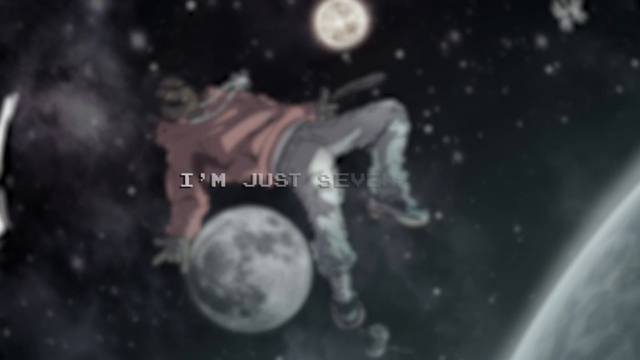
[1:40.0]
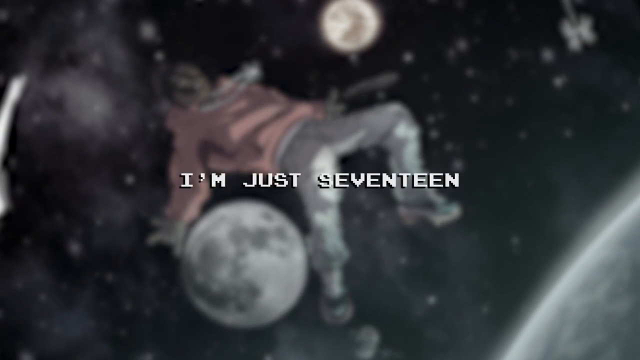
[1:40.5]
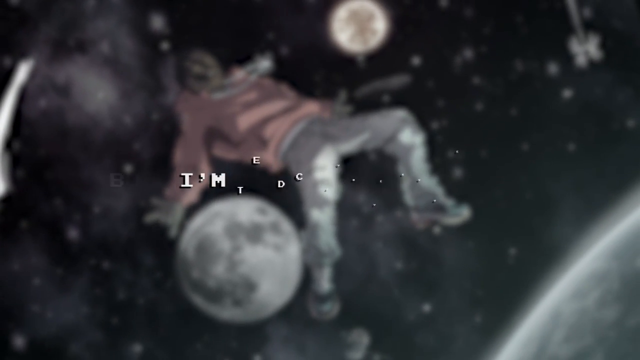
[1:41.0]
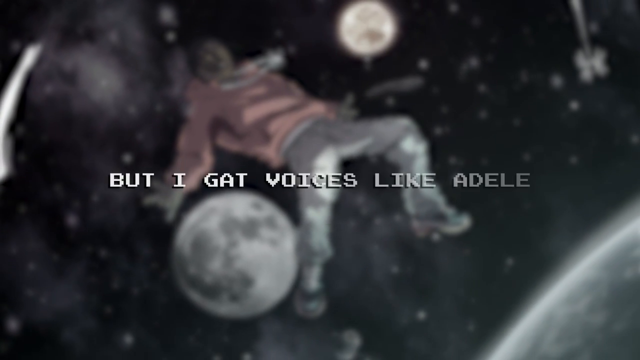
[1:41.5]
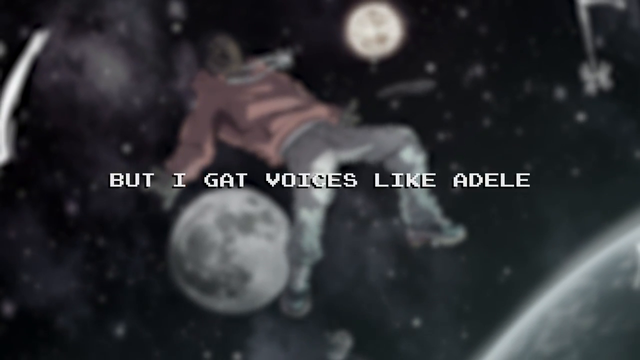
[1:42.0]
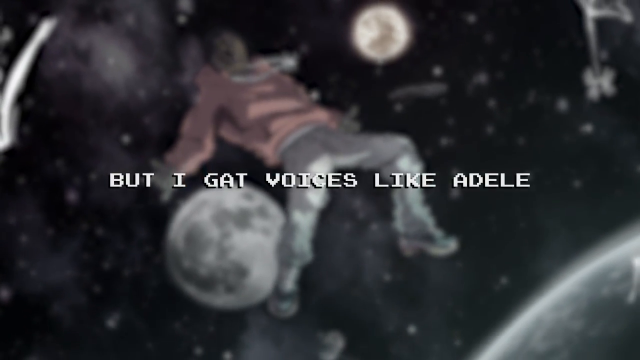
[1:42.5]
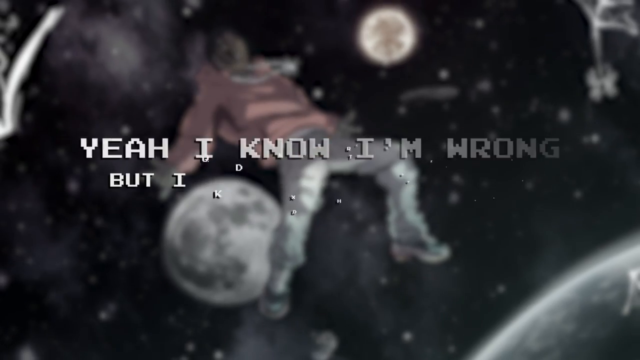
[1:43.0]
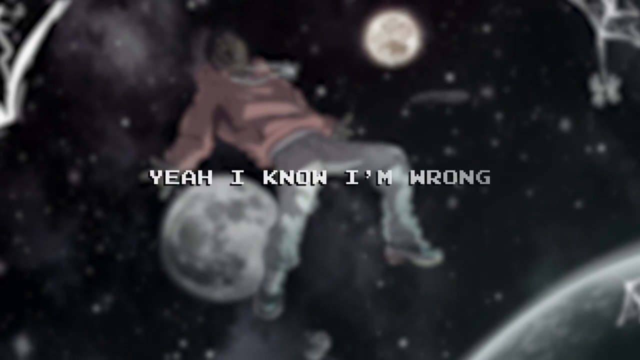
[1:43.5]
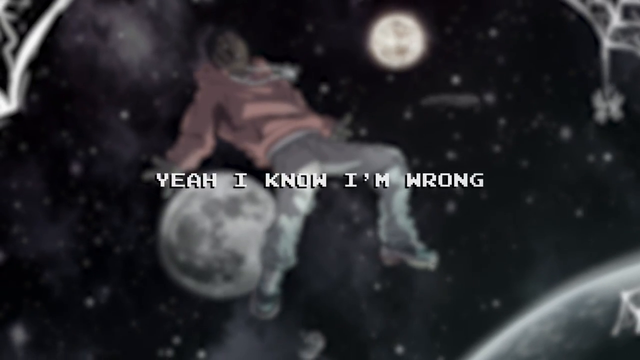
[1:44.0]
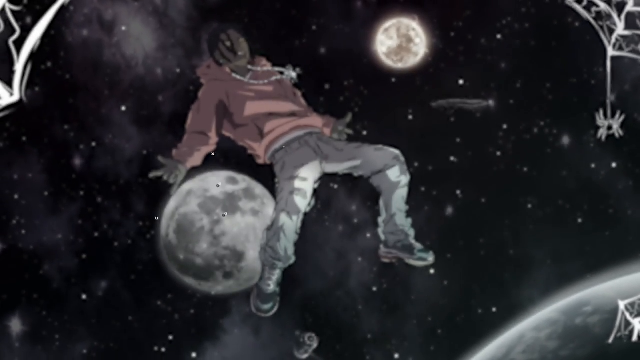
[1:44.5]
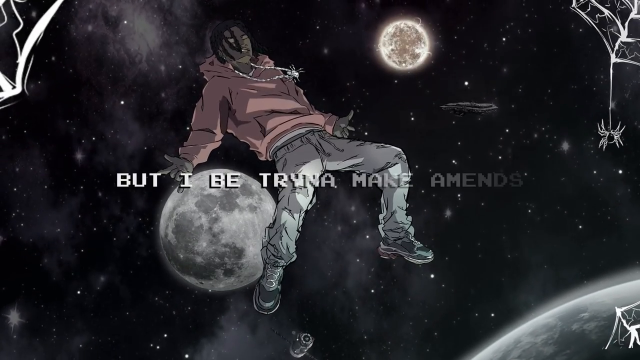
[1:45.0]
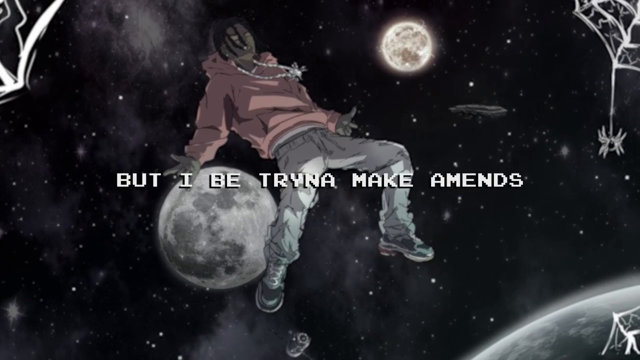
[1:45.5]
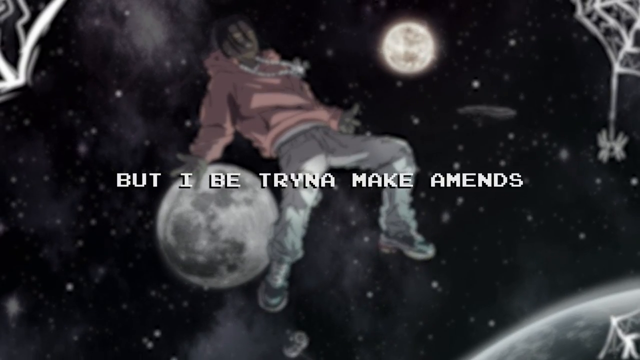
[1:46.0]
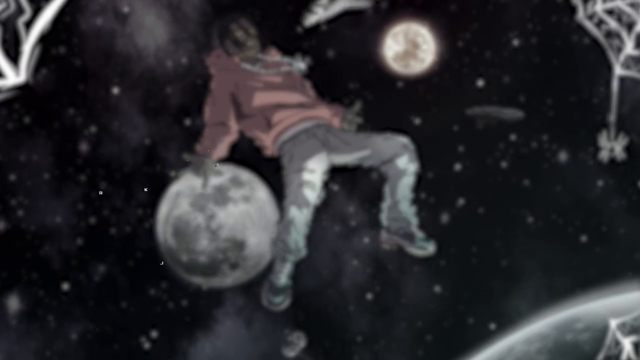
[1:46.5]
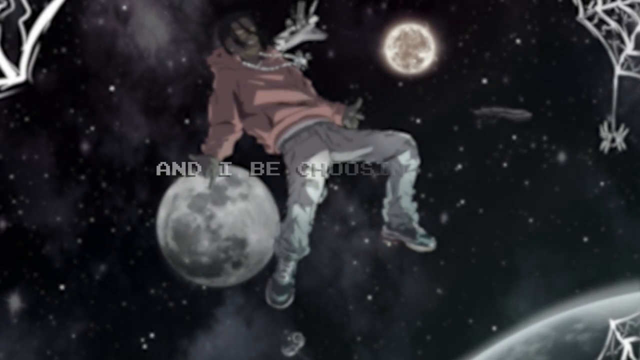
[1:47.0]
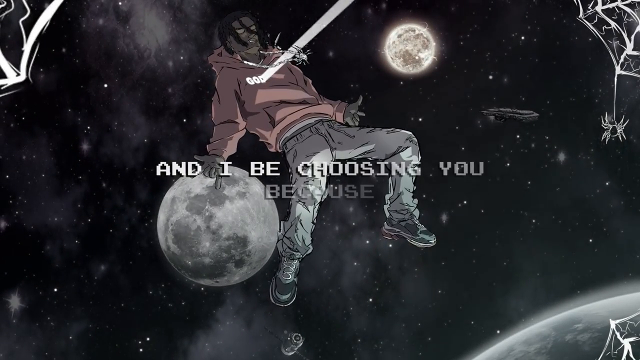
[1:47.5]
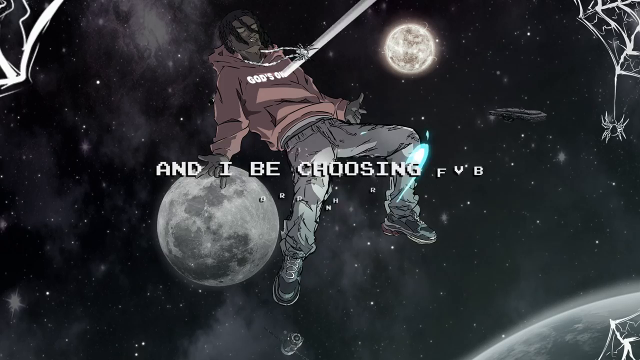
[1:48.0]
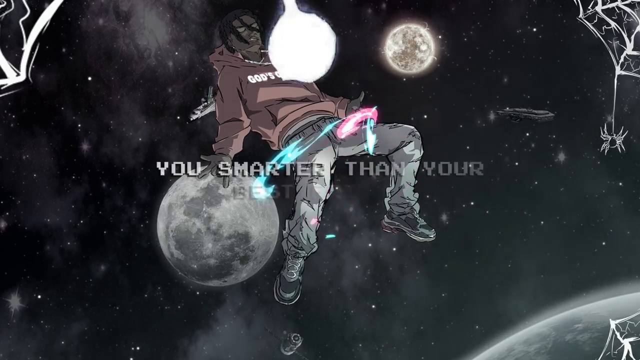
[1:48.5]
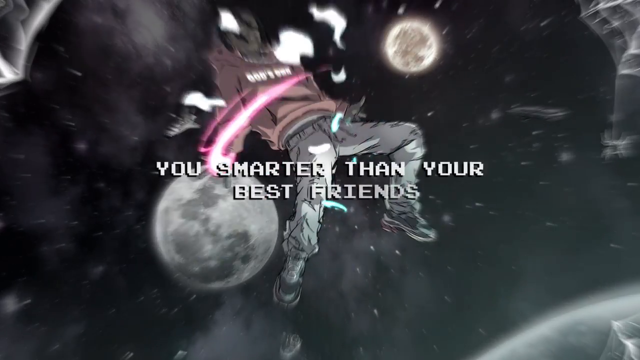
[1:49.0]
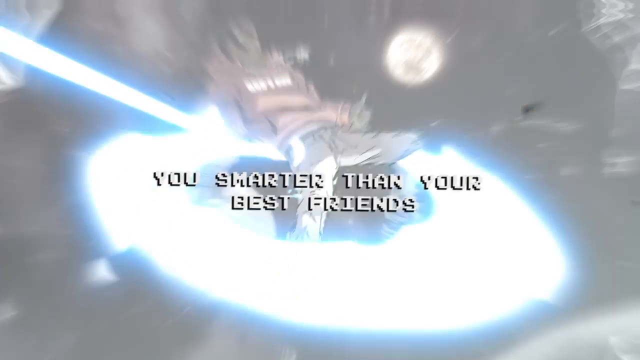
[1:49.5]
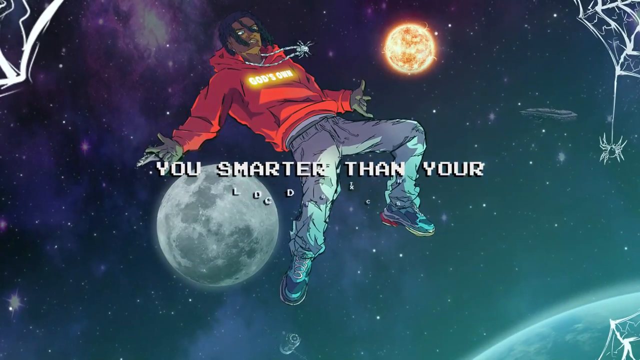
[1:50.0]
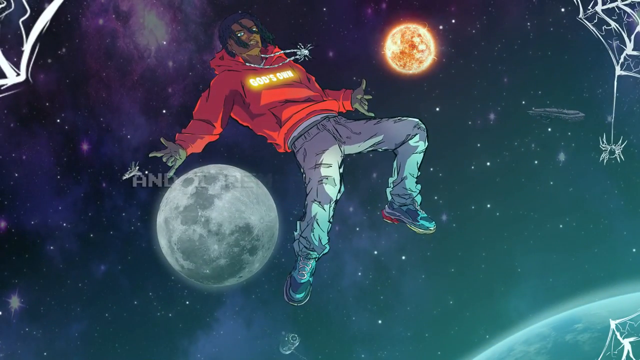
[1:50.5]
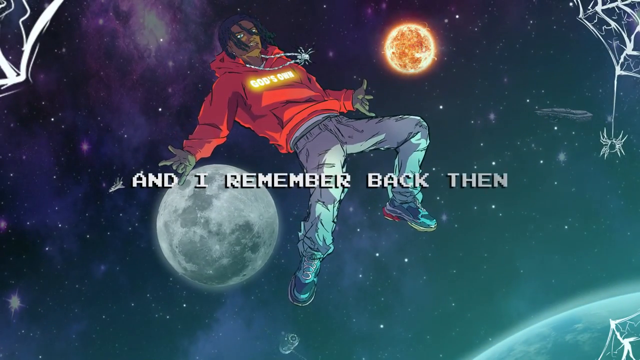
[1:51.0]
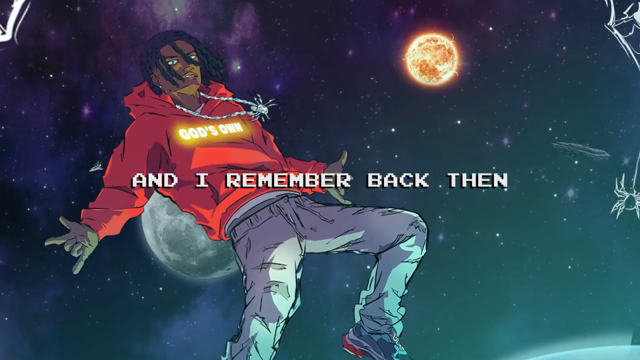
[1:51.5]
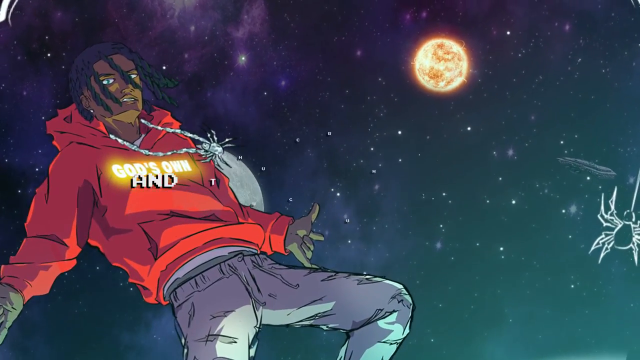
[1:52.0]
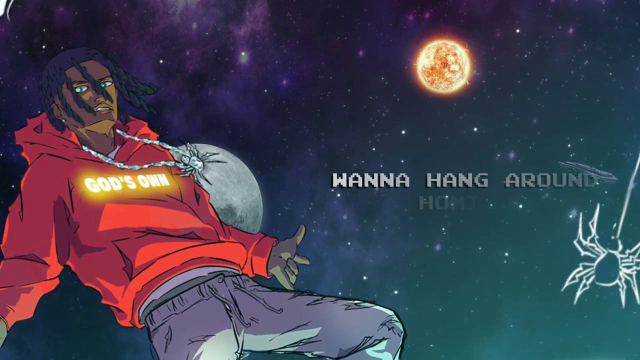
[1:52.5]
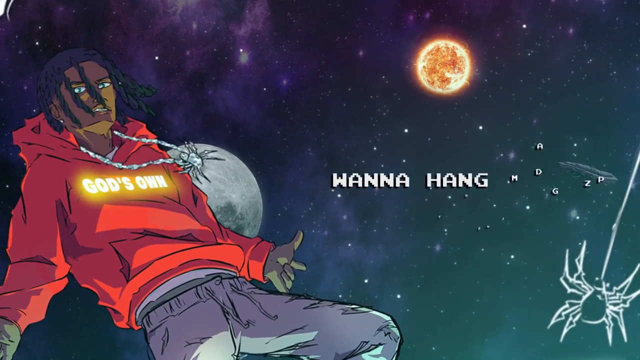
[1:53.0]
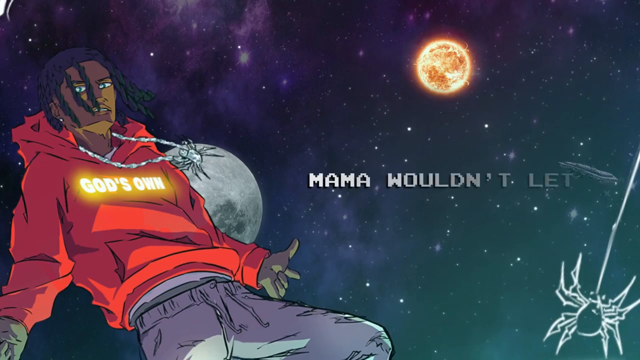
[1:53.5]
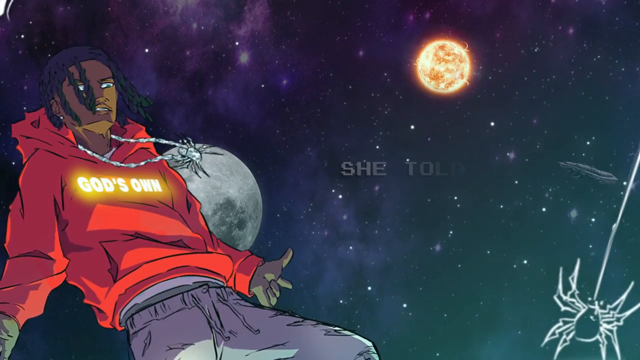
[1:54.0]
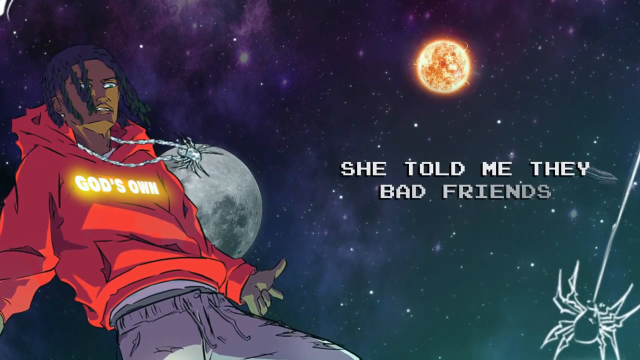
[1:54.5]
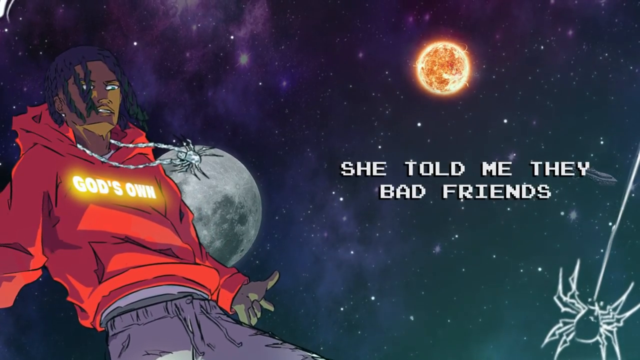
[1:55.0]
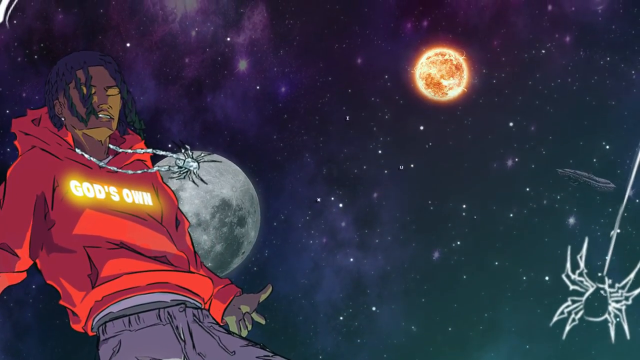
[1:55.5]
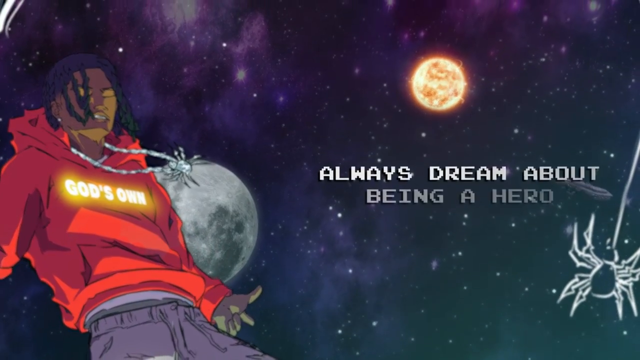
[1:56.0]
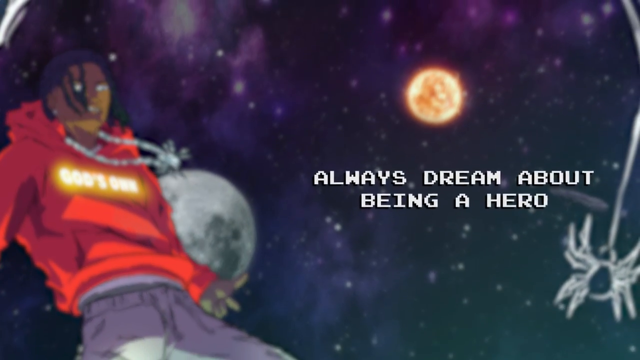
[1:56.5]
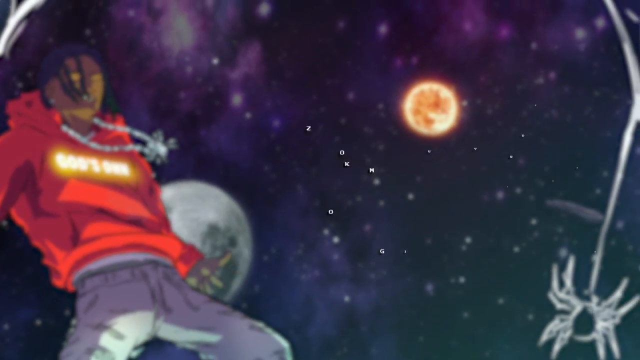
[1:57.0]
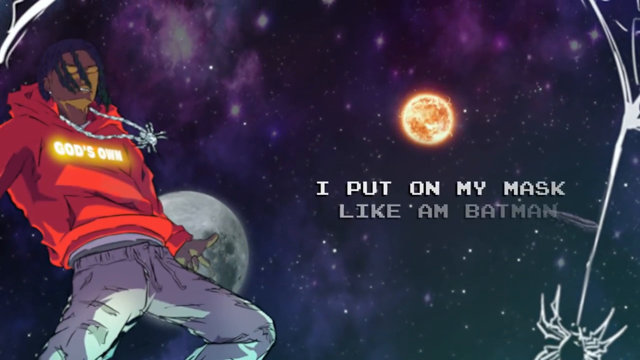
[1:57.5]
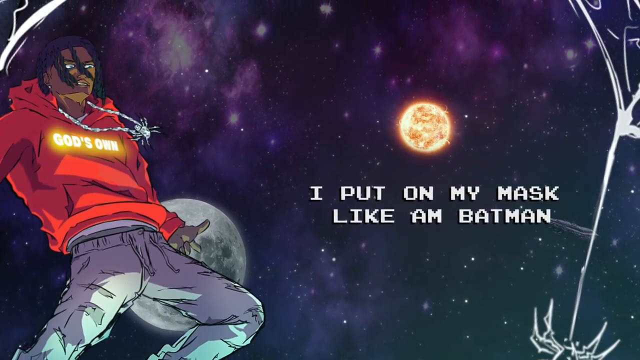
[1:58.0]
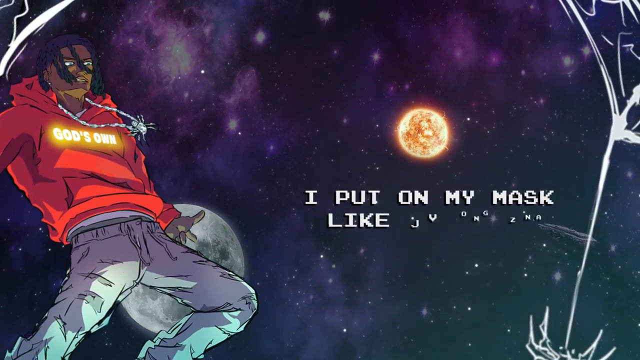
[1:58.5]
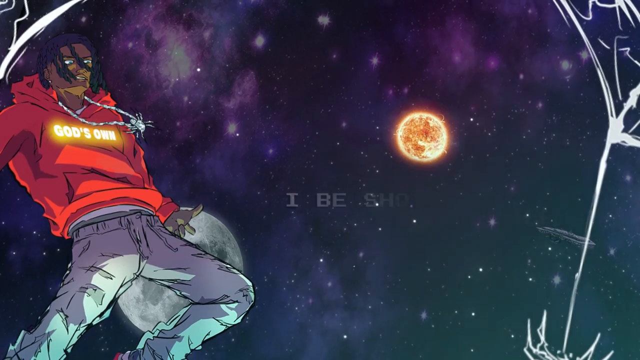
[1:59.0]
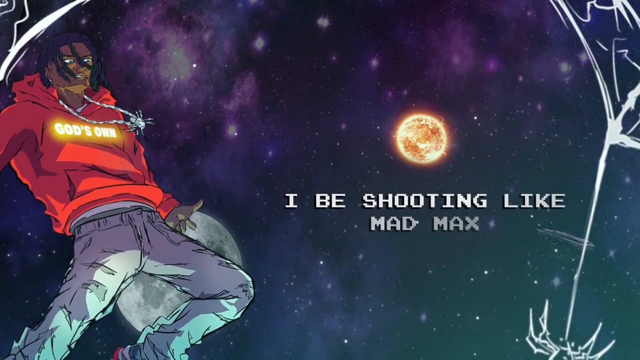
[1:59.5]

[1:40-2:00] The space scene is still desaturated until a light, almost like a laser light, comes in and inscribes "God's Own" across the chest of the character's hoodie. Then there is another glitch, and lighting effects transition everything from the desaturated, muted colors to bright, saturated colors again. A space shuttle flies across in the far distant background. The sun glows fiery in the back, and a moon sort of revolves closer to the character. The spider dangles from the corners, the spiderweb is in the opposite corner, and a spider is on the character's necklace. The lyrics float through space along with the character and the other space visuals, and some lyrics from the beginning may be returning.